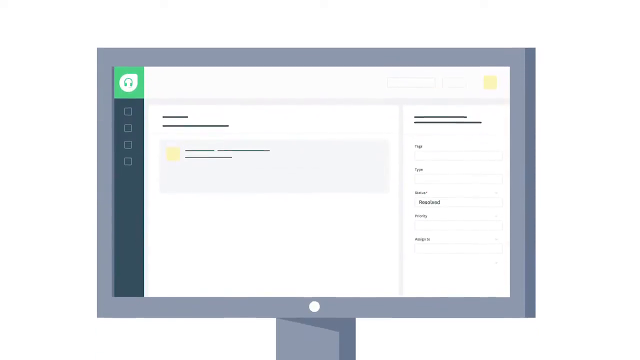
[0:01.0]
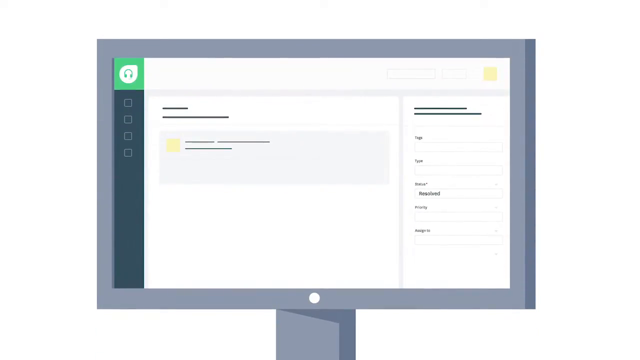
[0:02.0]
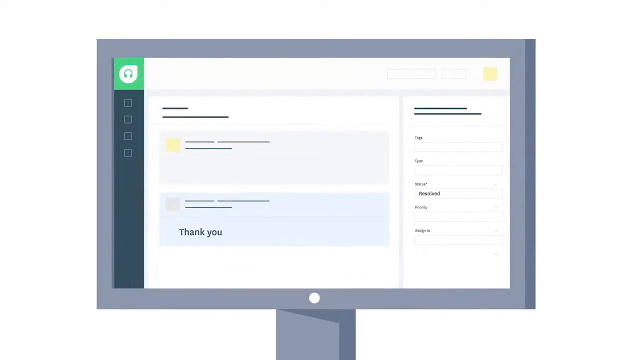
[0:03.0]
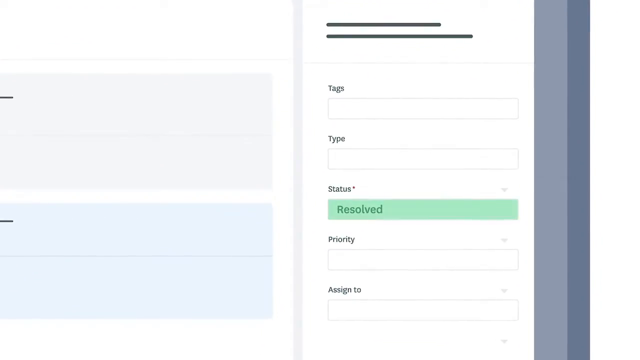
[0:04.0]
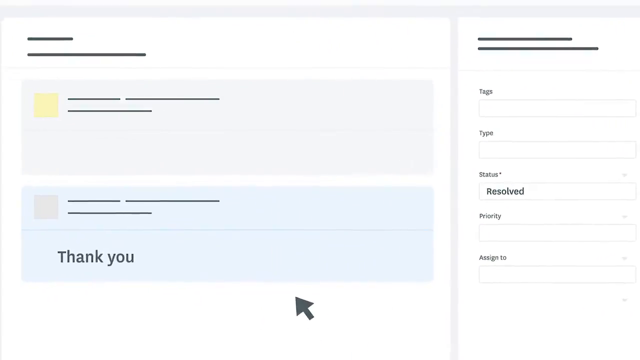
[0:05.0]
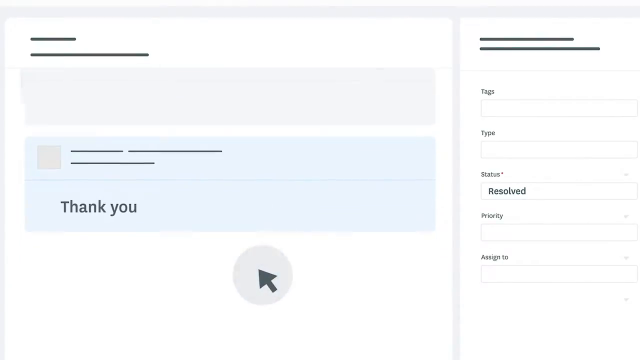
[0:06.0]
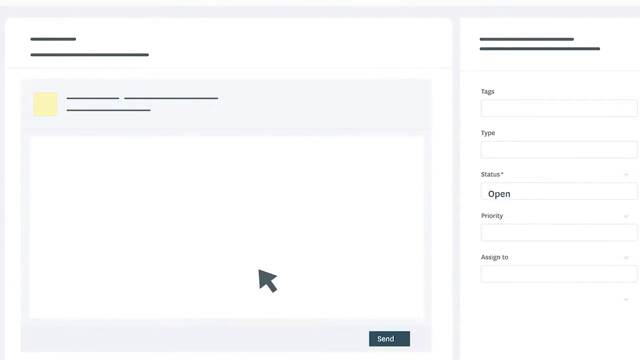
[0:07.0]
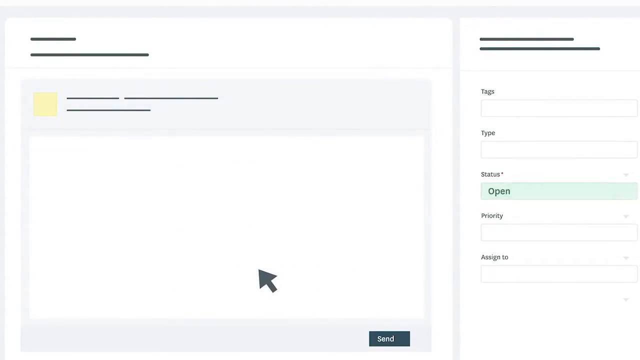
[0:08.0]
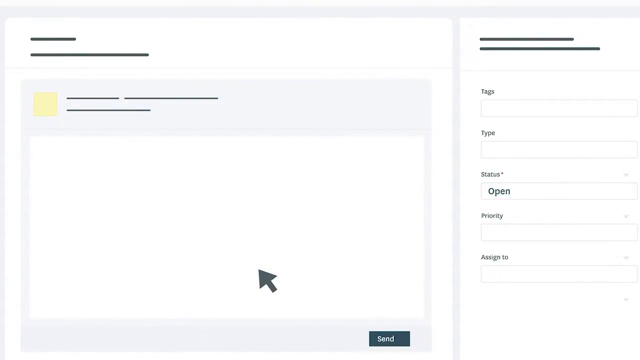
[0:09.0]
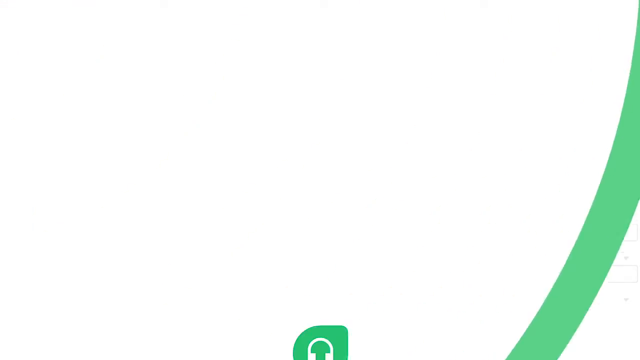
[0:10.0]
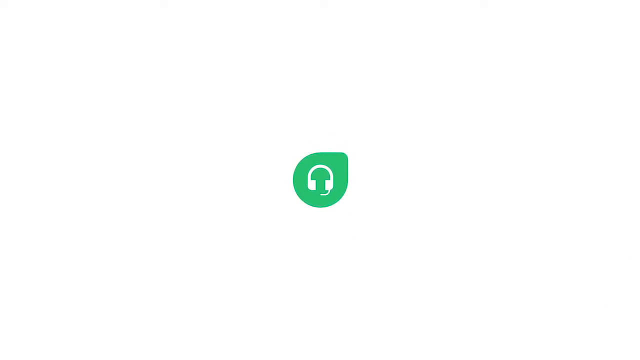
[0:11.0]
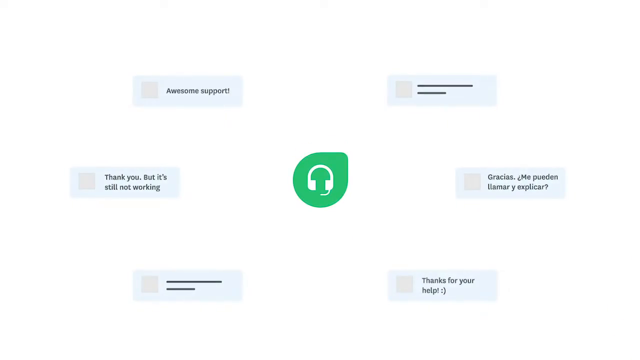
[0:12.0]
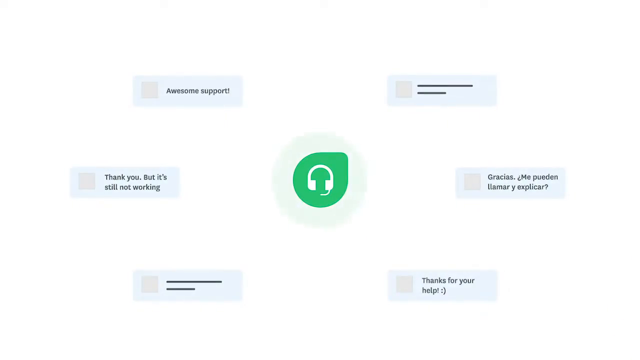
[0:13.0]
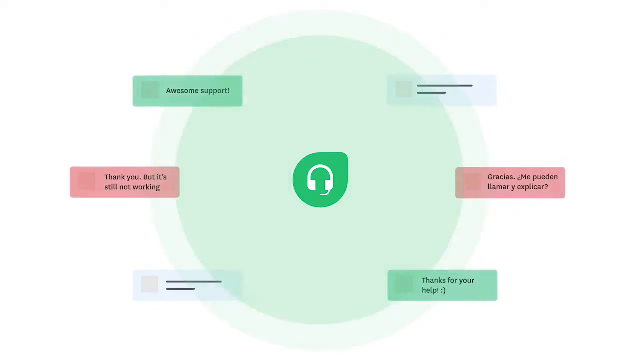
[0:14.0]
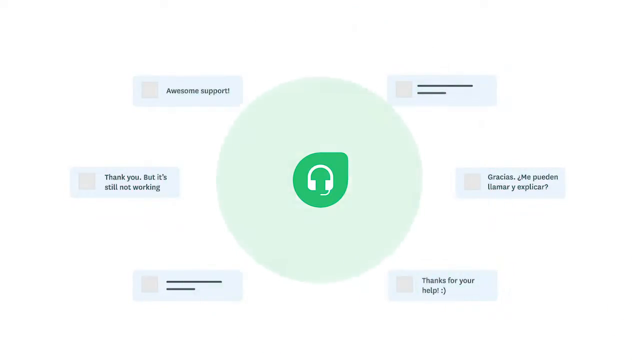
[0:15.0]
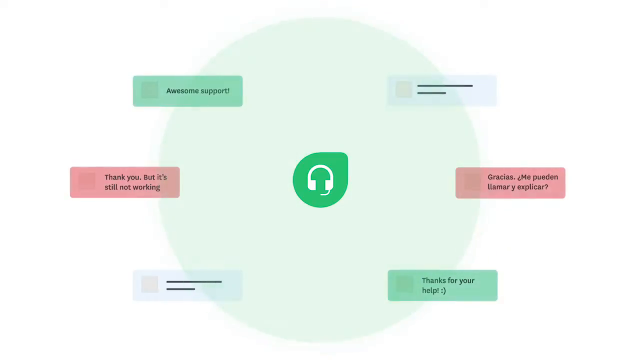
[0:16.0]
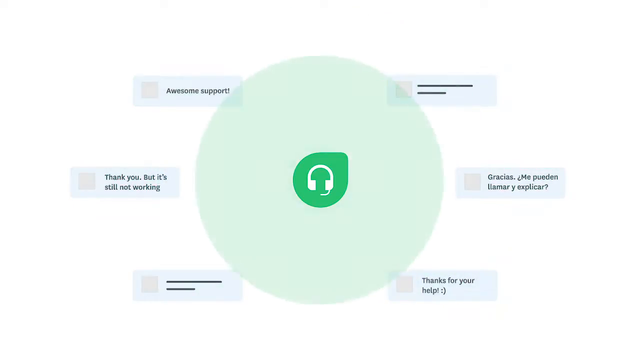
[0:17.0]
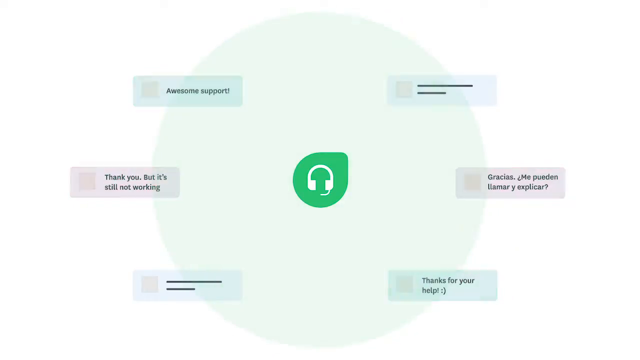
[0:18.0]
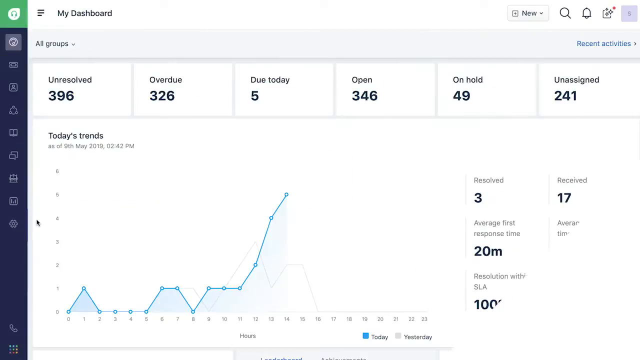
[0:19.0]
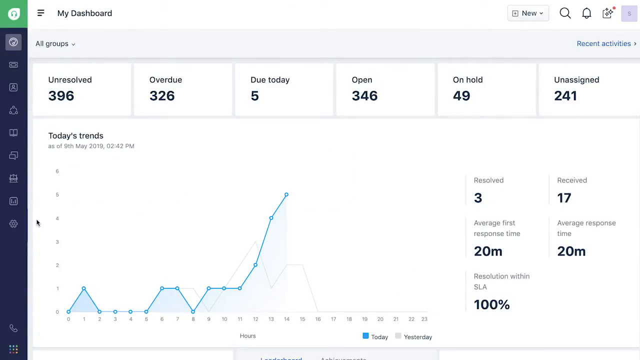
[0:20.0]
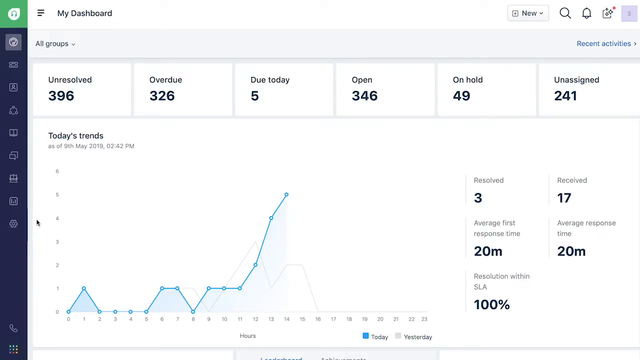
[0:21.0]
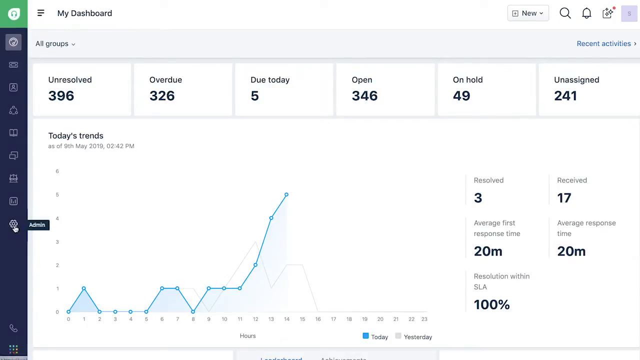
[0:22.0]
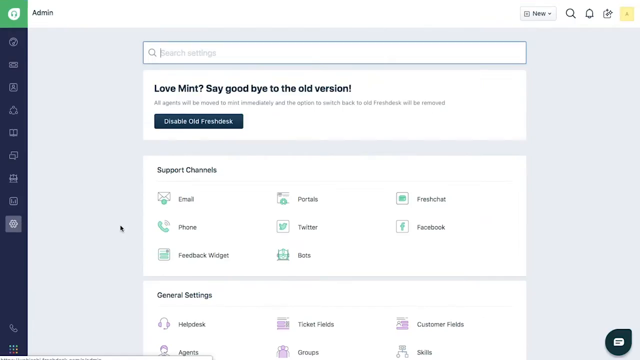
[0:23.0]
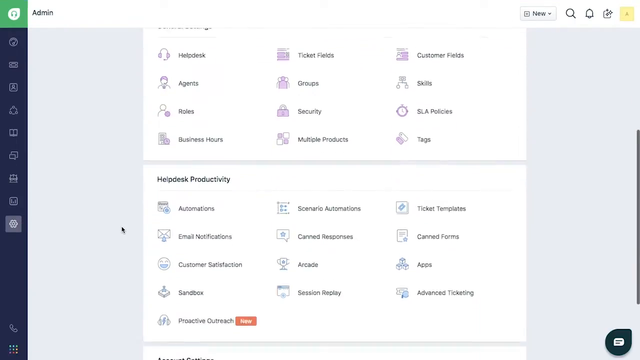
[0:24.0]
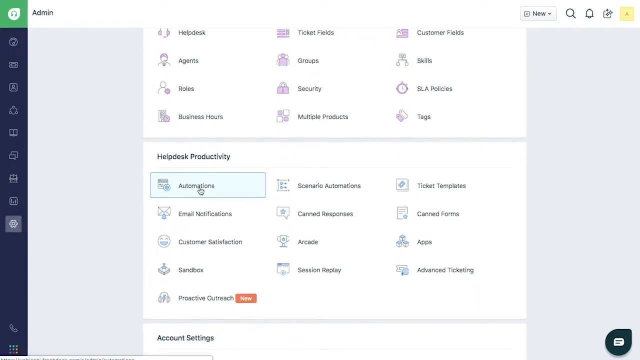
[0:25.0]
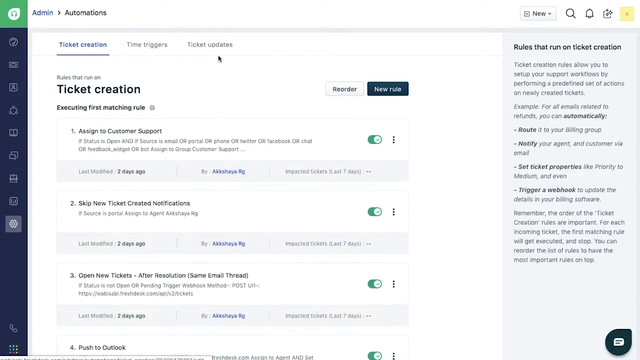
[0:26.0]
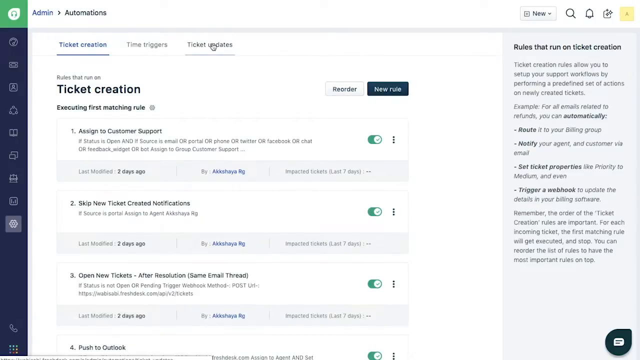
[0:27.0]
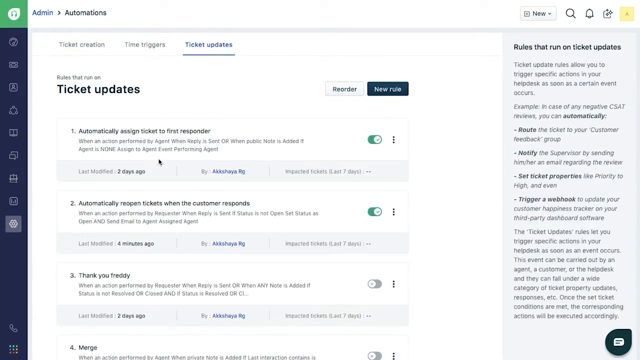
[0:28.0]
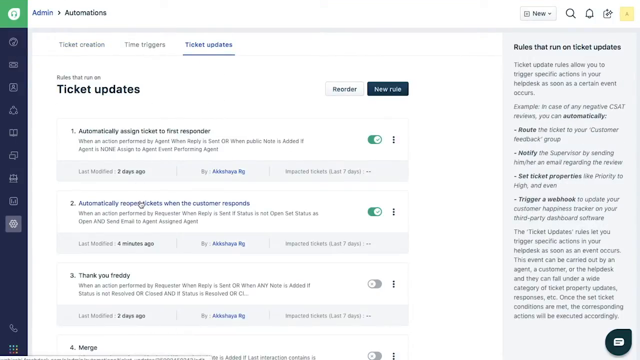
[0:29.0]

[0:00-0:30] The video opens on a white screen, then a 2D animation of a gray flat-screen computer monitor appears from the bottom. The monitor displays various generic imagery that looks like text boxes. The view zooms in on the right side, which has multiple text entry boxes: the top one is tags, followed by type, status, priority, and assign to. A mouse pointer appears on the main screen, and the frame of the monitor disappears. The mouse clicks on a box that reads "thank you," which expands it into a large text box with a send button at its bottom right. A transition follows, showing a white headphone graphic on a green circle with various messages and posts around it, and a pulsating green light comes from the headphone circle. Another transition reveals a ticket dashboard listing multiple customer service tickets.